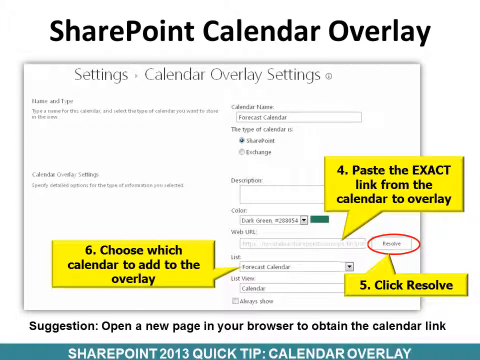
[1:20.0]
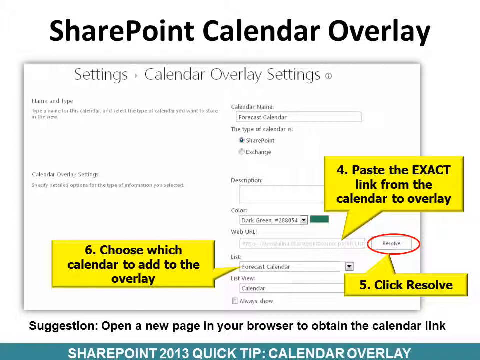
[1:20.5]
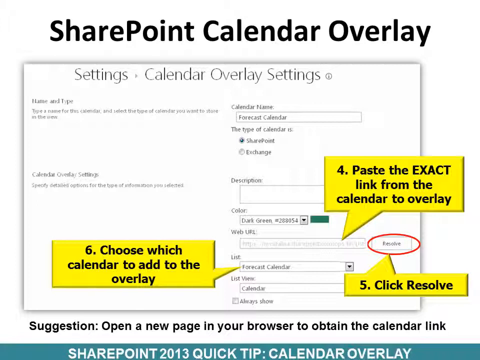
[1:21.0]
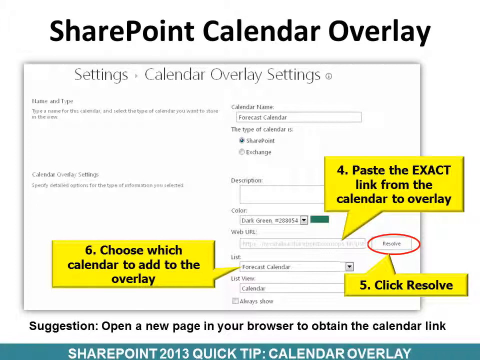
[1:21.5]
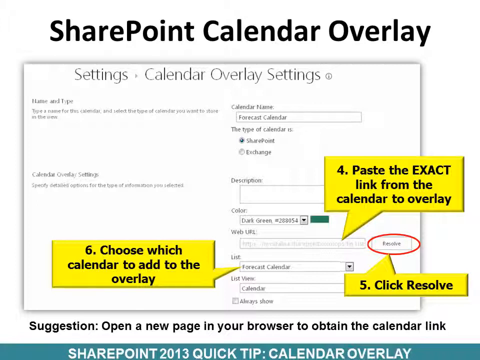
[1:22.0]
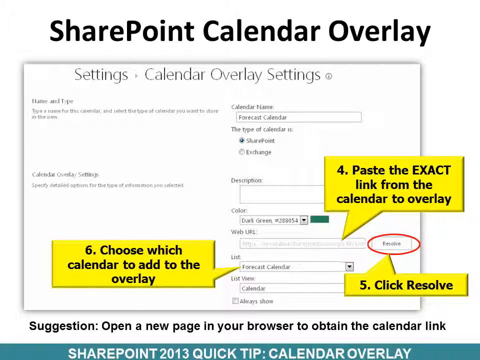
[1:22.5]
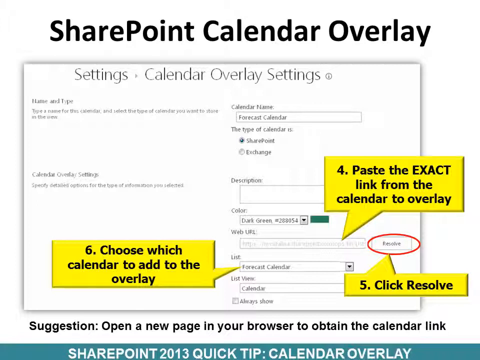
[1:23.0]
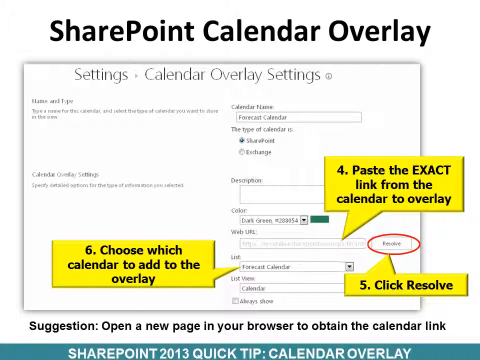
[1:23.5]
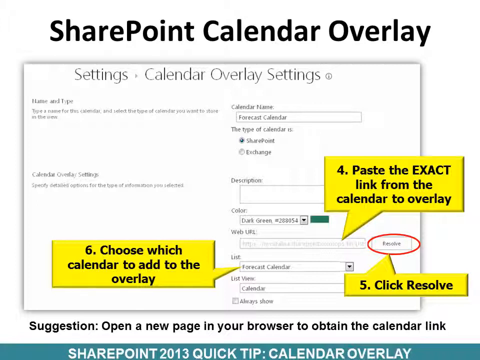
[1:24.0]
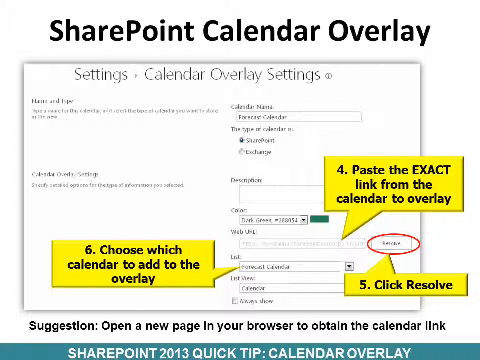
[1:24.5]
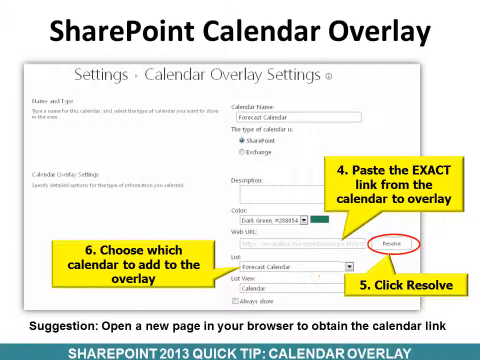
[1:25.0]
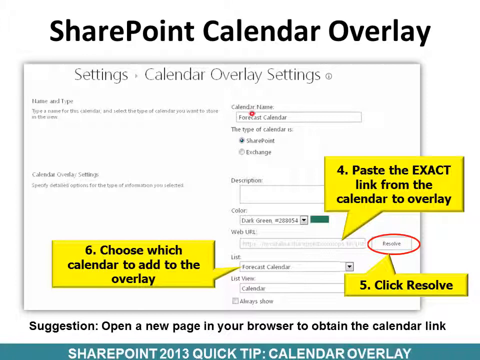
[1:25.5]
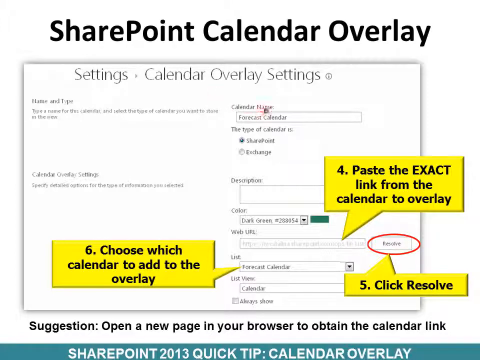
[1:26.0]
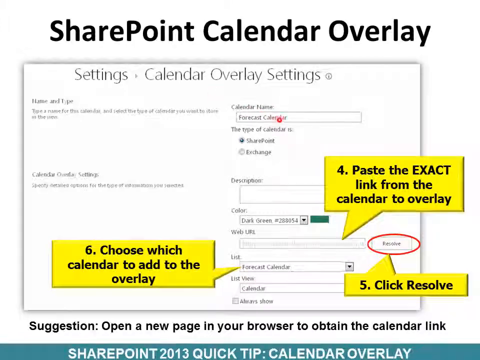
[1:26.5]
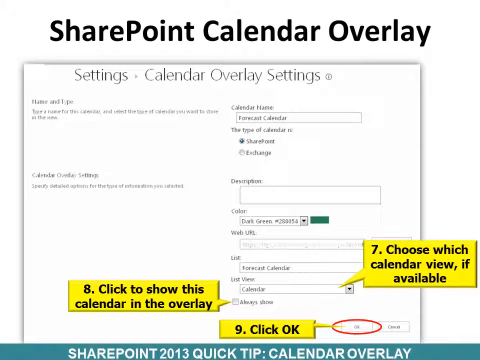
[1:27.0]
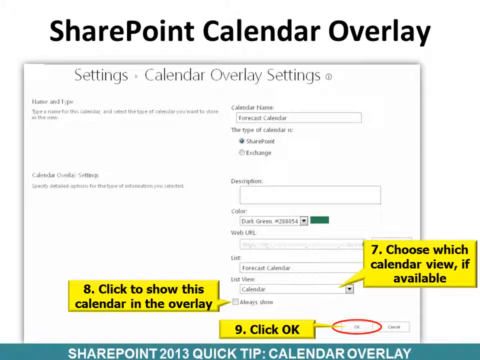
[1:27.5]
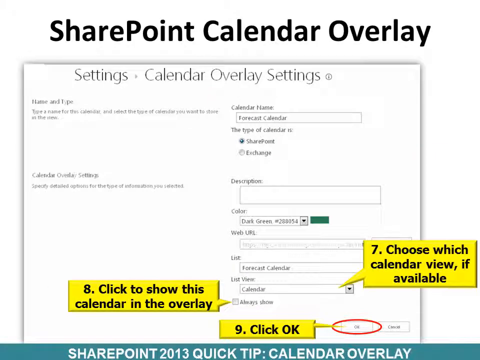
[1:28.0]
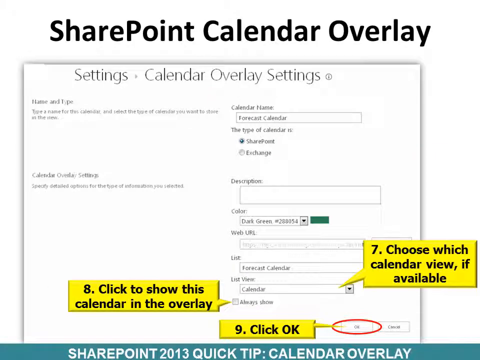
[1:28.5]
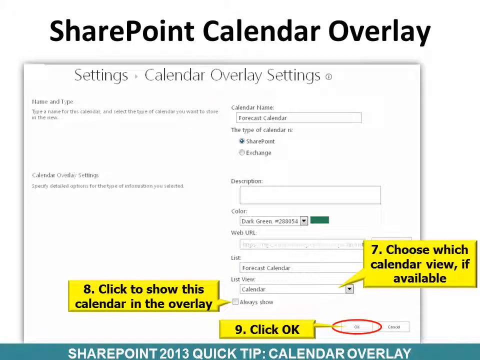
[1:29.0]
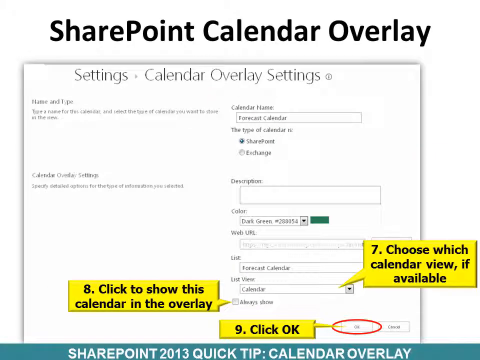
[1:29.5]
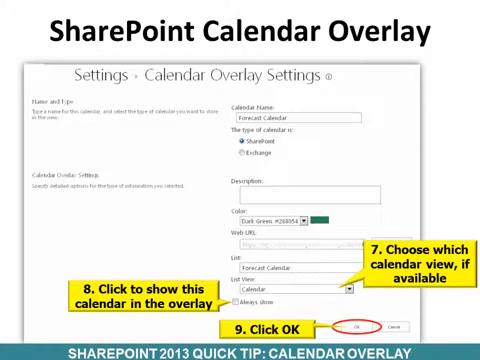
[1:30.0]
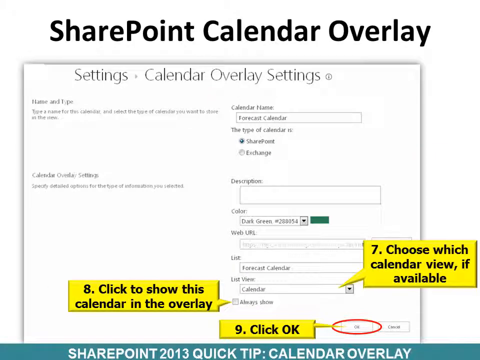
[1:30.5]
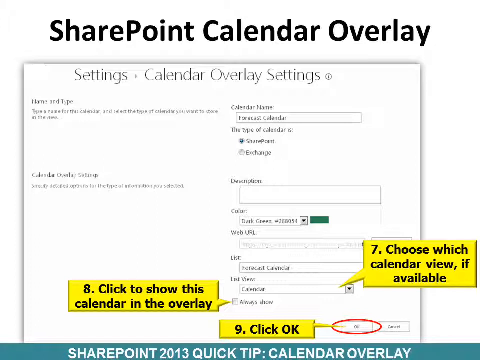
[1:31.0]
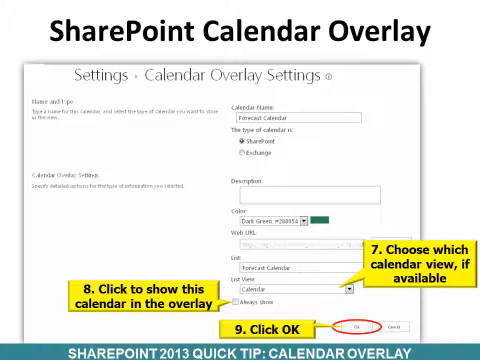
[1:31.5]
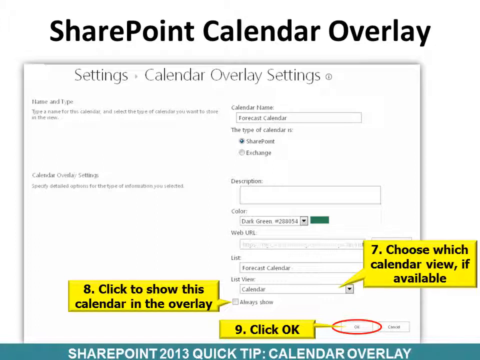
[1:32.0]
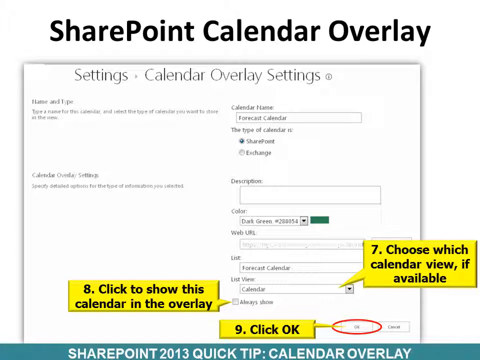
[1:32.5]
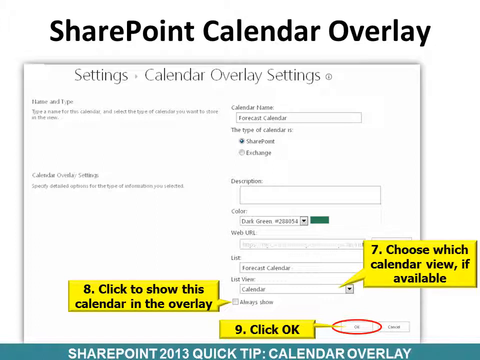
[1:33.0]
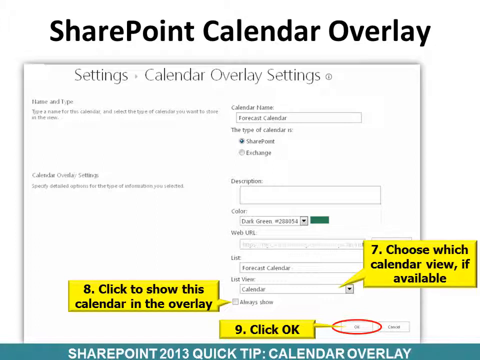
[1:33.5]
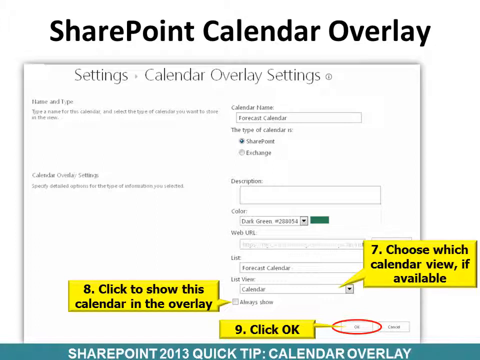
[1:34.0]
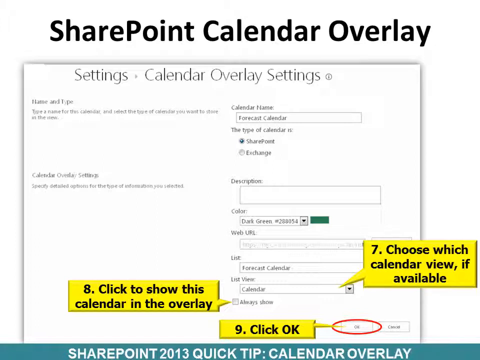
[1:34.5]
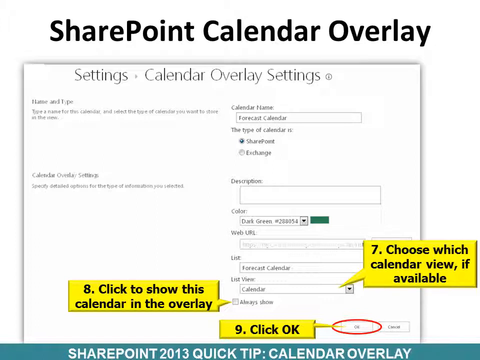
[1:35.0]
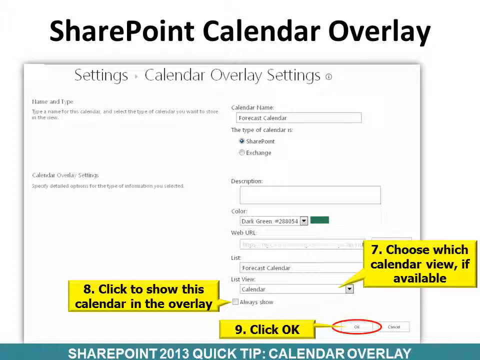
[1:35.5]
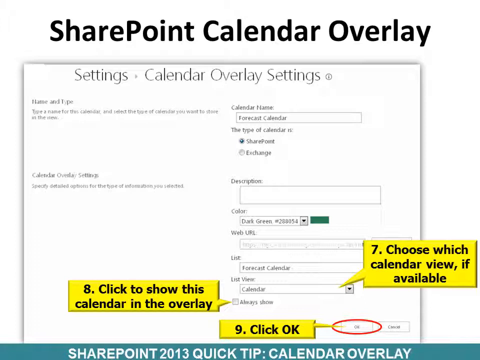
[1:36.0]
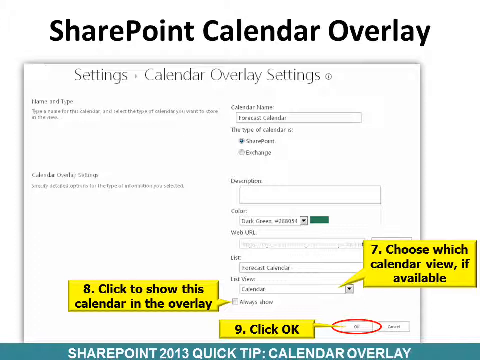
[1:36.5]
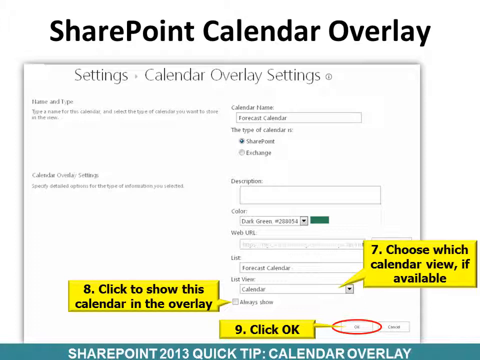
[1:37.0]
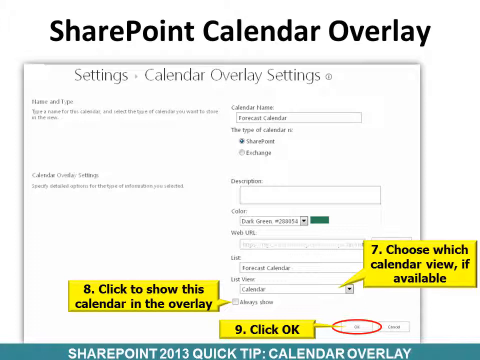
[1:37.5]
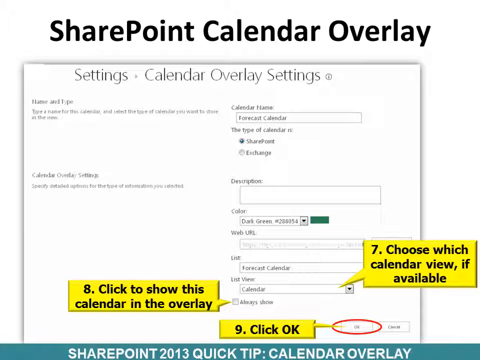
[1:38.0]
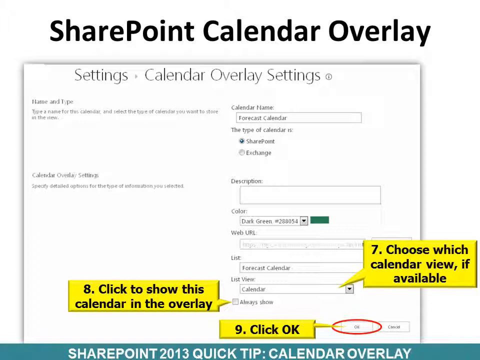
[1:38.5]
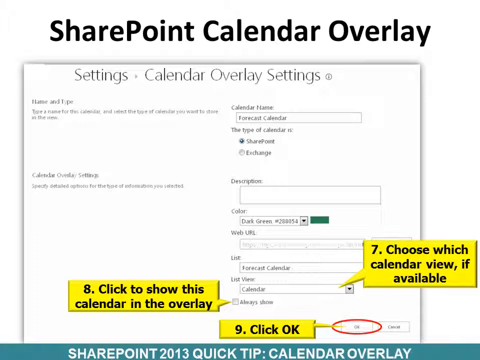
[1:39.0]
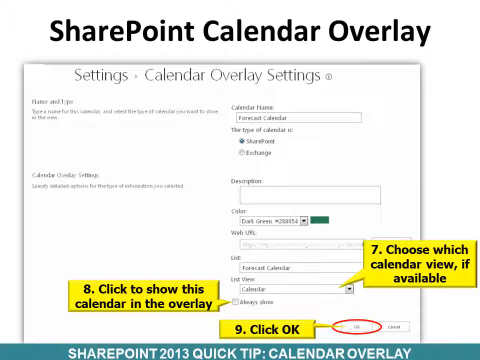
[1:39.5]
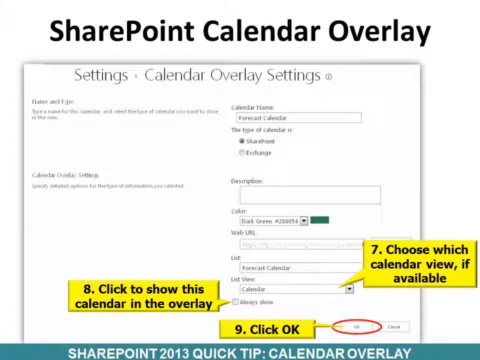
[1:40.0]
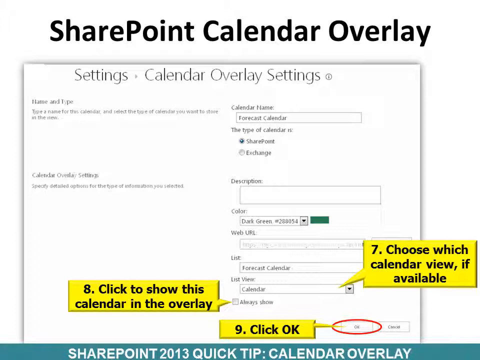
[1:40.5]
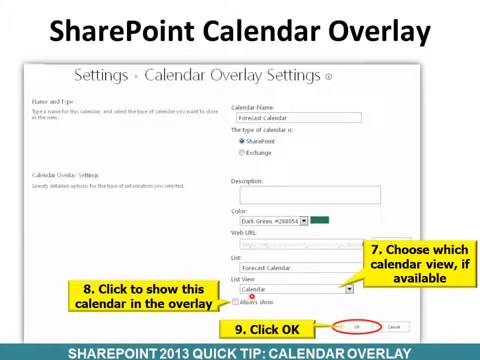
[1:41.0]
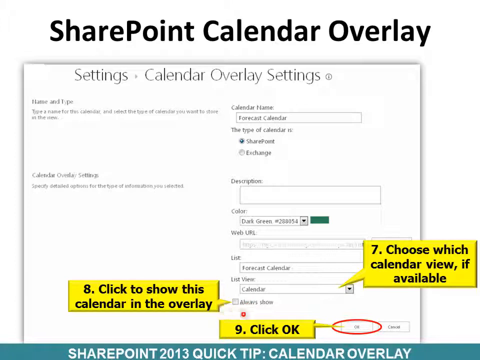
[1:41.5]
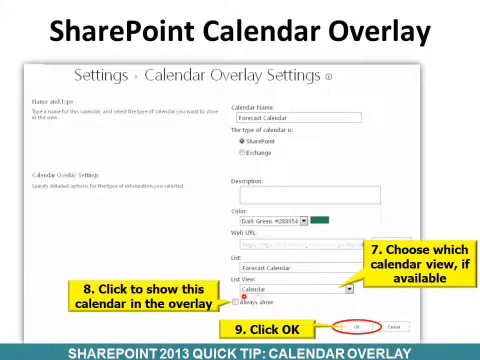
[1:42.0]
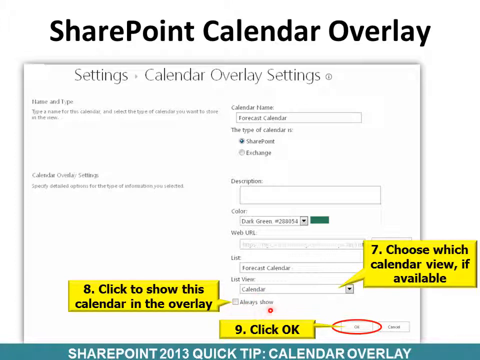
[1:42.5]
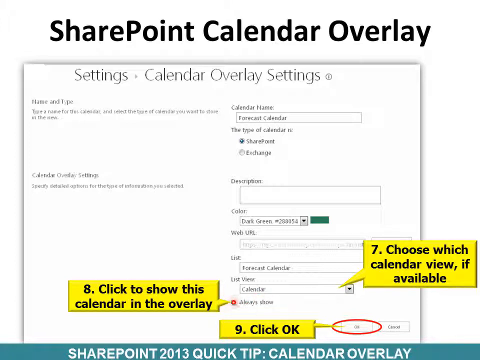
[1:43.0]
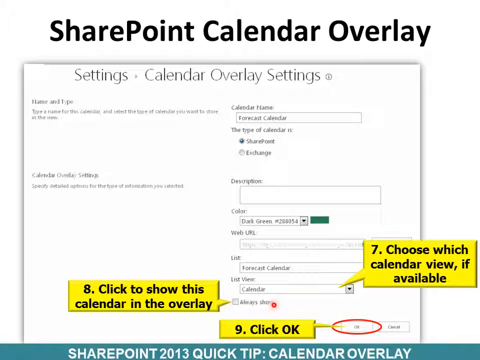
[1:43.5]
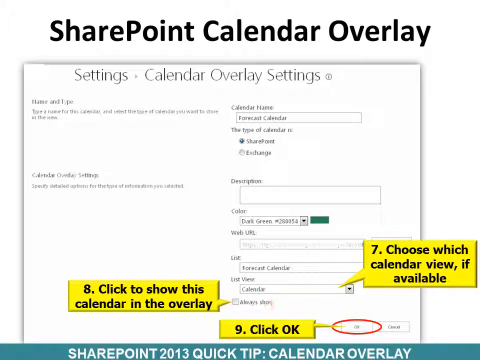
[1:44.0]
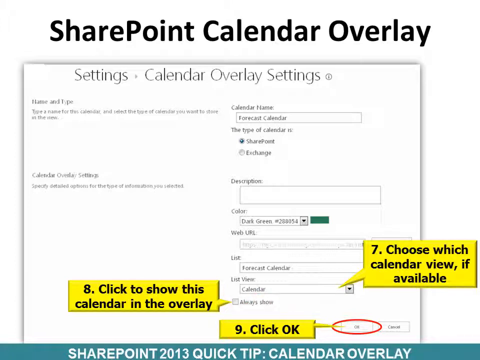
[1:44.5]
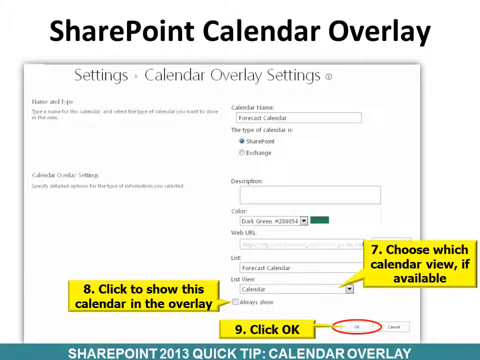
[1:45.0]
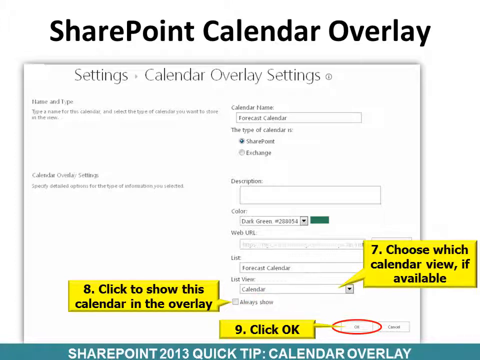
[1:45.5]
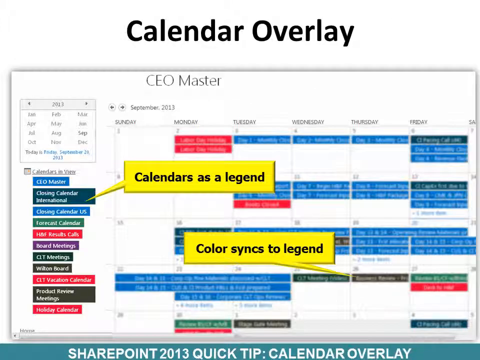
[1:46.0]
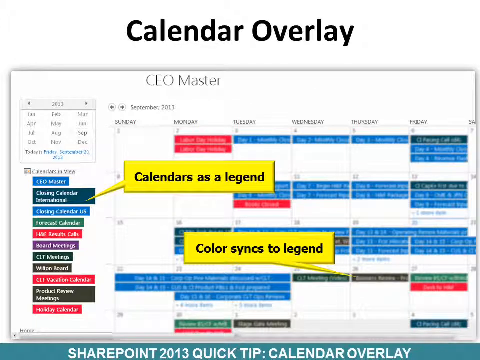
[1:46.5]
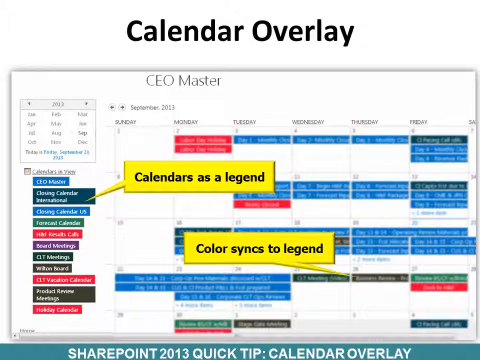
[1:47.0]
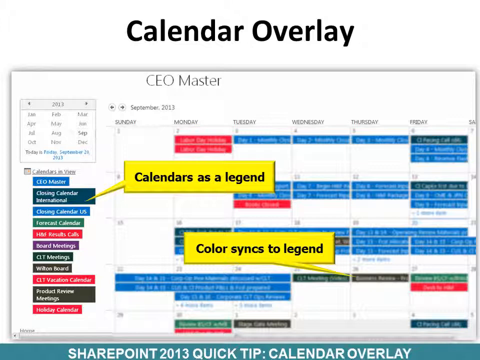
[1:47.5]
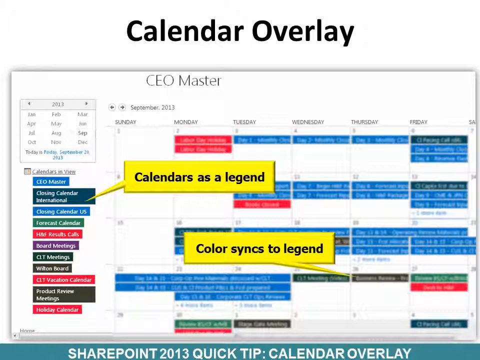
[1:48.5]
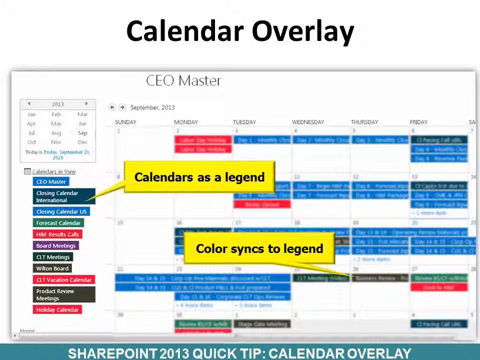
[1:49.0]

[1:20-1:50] The calendar overlay settings appear on a shared computer screen with a white background and black text. Step four, highlighted in yellow, is to paste the exact link from the calendar to overlay; step five is to click the resolve button; and step six is to choose which calendar to add to the overlay. The video shows where to point and click each button, then adds a seventh step, choosing which calendar view if available, and an eighth step, clicking to show this calendar in the overlay.